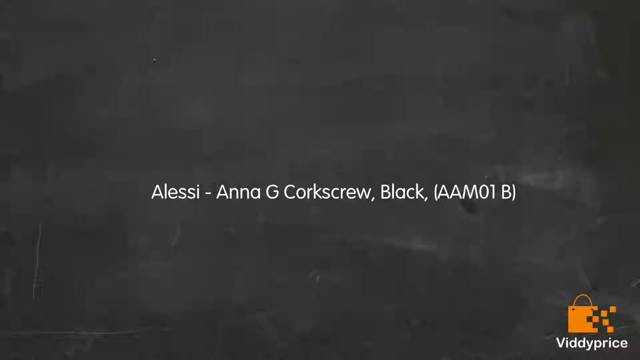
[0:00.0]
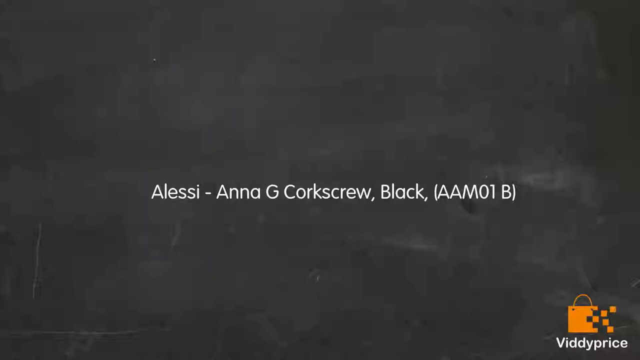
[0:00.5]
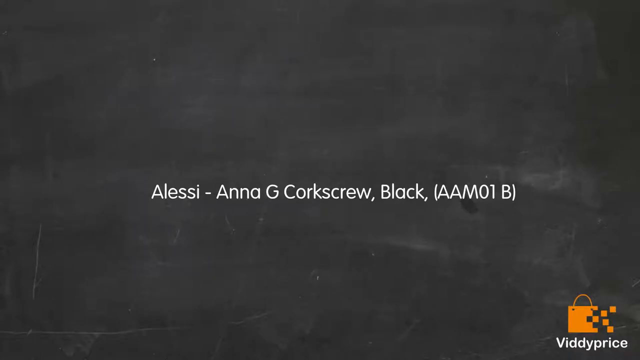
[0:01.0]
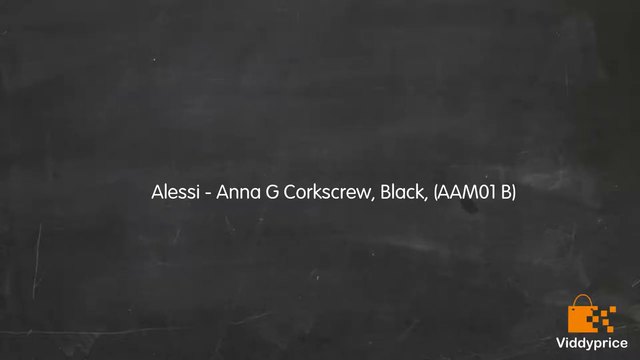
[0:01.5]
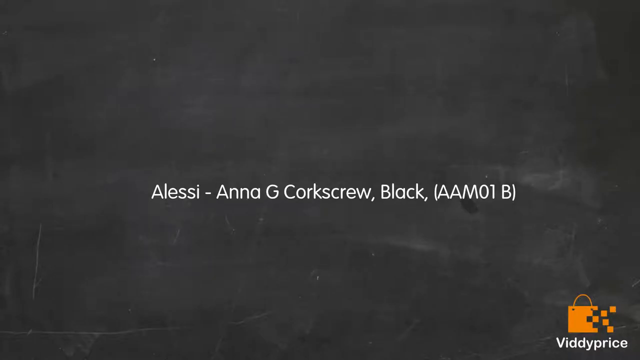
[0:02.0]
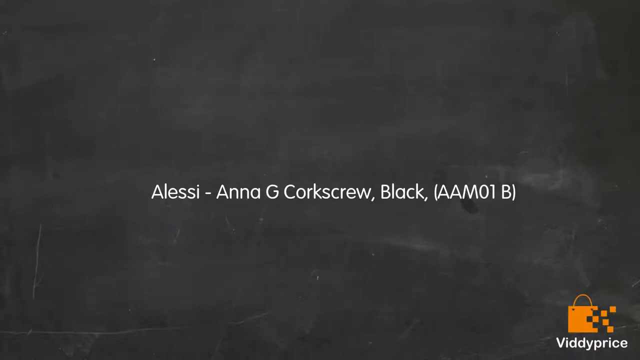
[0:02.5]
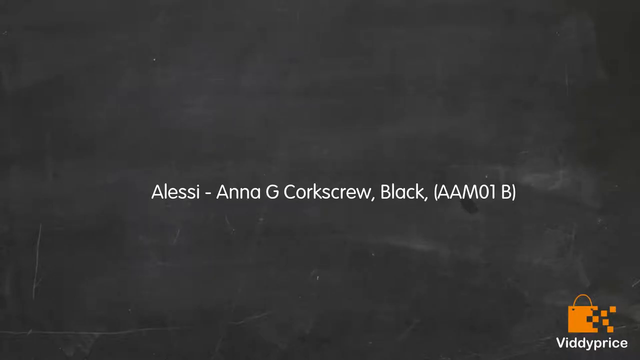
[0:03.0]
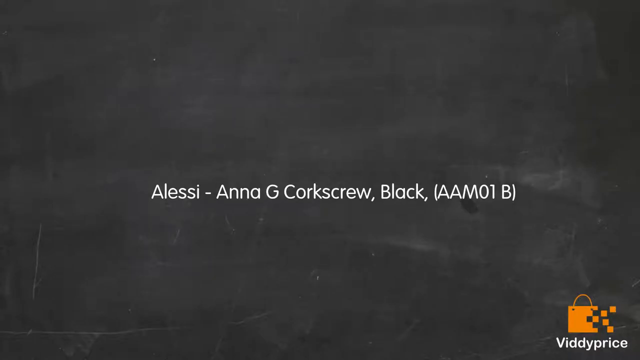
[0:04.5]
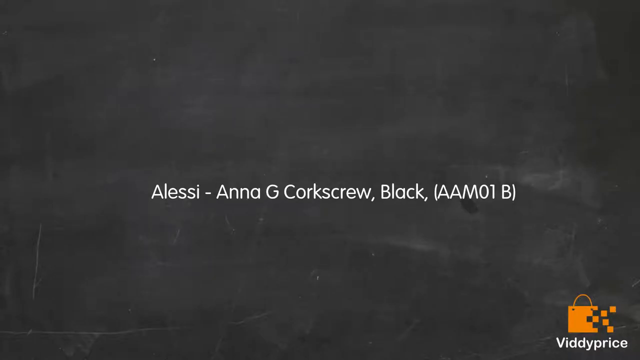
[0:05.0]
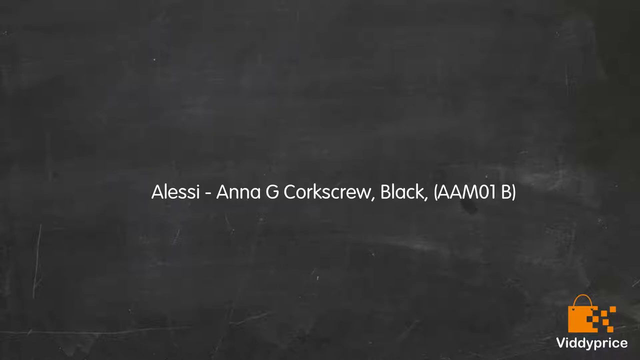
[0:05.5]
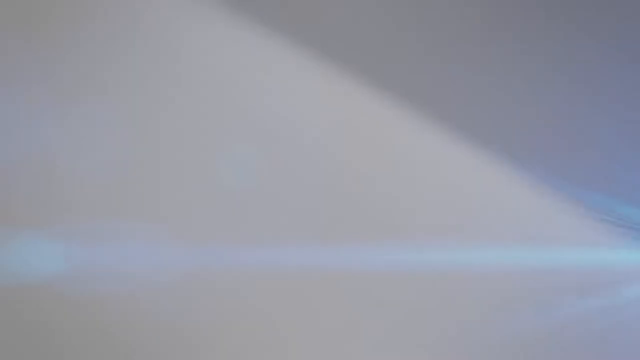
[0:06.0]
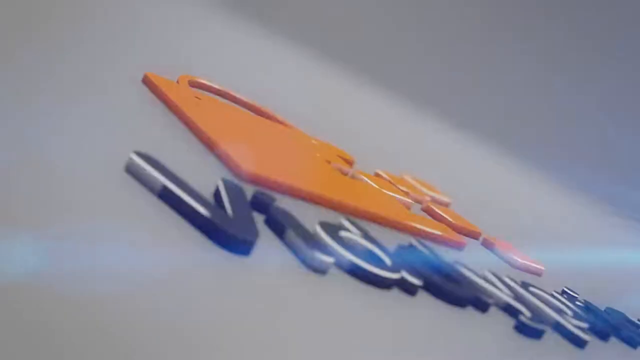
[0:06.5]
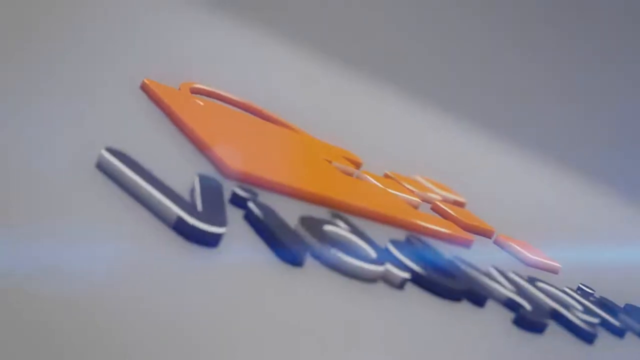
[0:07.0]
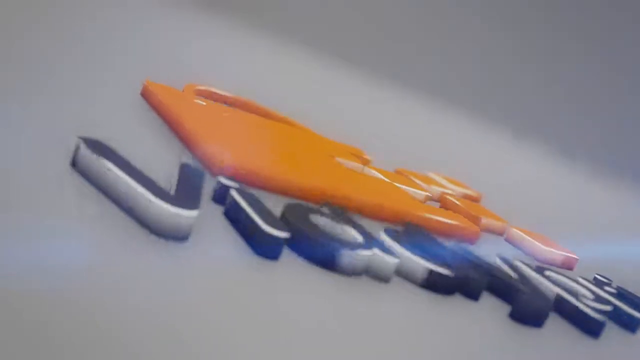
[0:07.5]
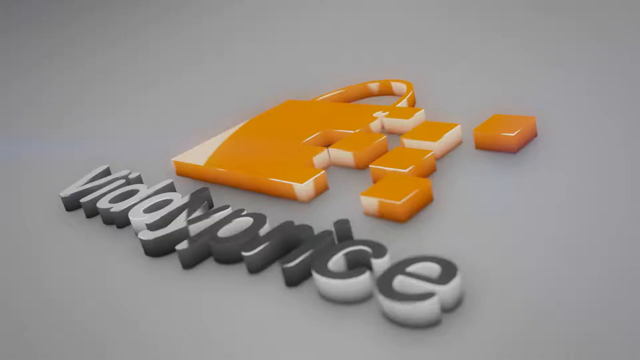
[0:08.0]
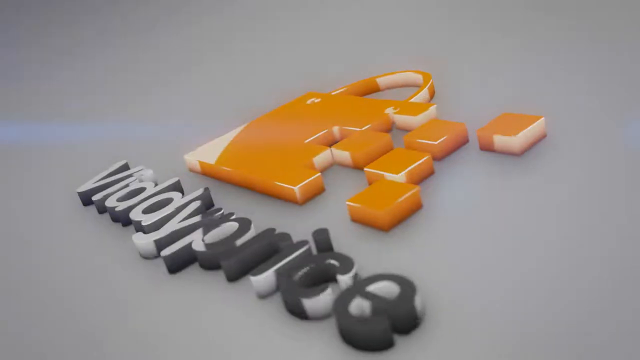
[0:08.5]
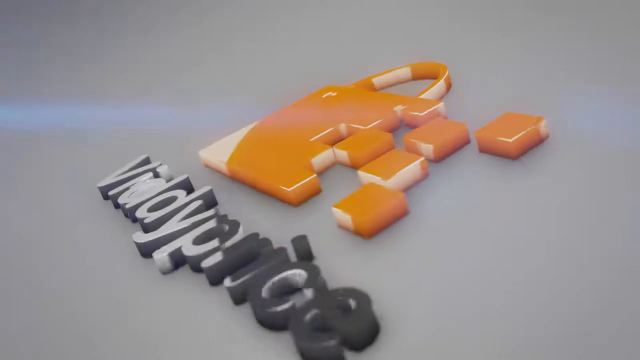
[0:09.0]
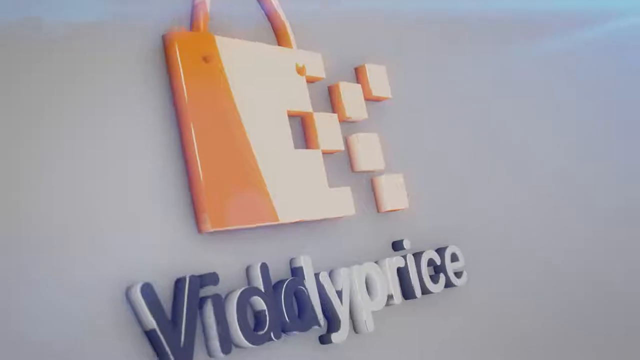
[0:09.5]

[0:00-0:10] White text appears on a black background that looks like a flat chalkboard that has been poorly erased. It reads "Alessi - Anna G corkscrew. Black" and then, in parentheses, "AAM01B", apparently an item number. After this, a logo pops onto the screen that says "Viddy Price". The logo is almost three-dimensional and looks shiny, almost as if it were made to look like plastic. Above the words there is something like an orange shopping bag that is coming apart into cubes.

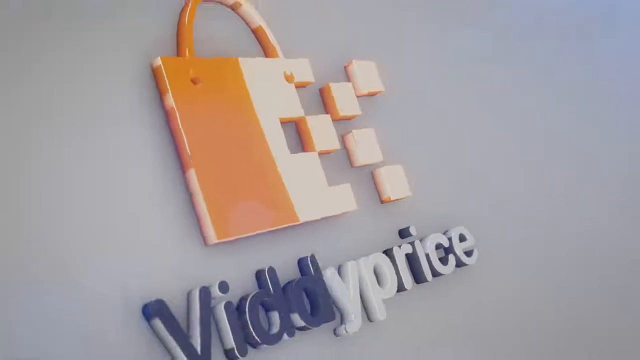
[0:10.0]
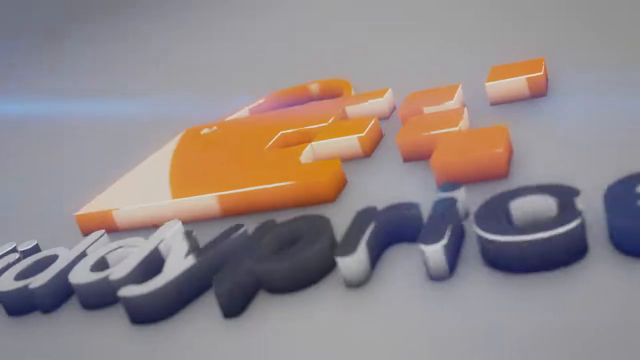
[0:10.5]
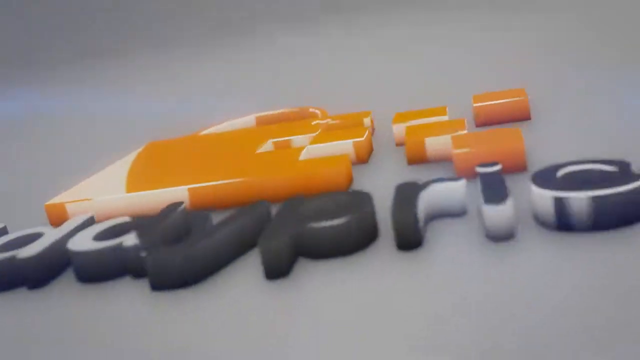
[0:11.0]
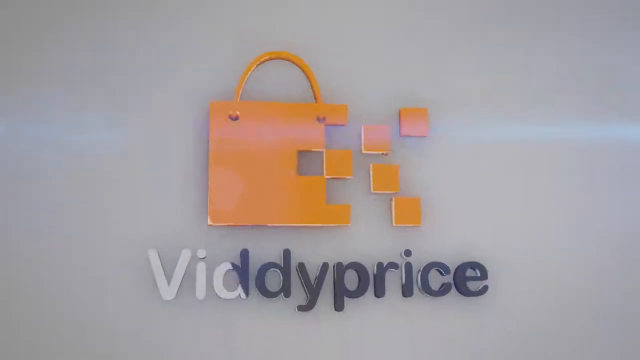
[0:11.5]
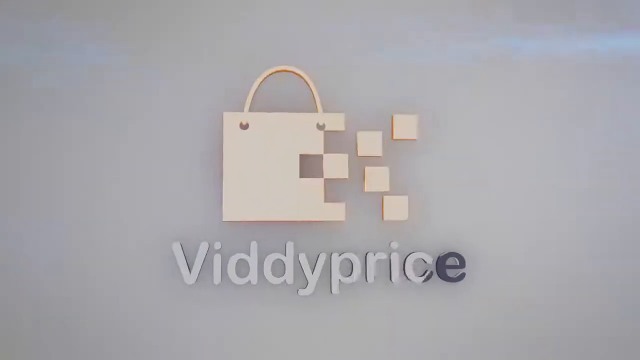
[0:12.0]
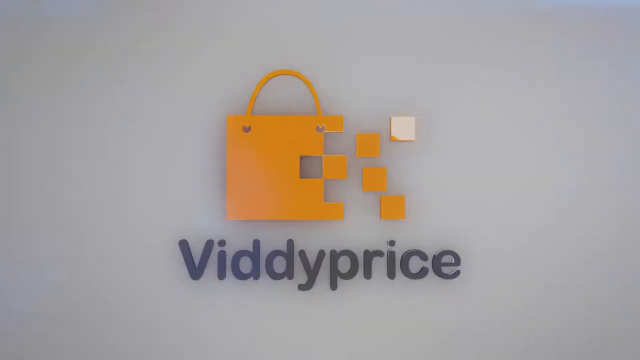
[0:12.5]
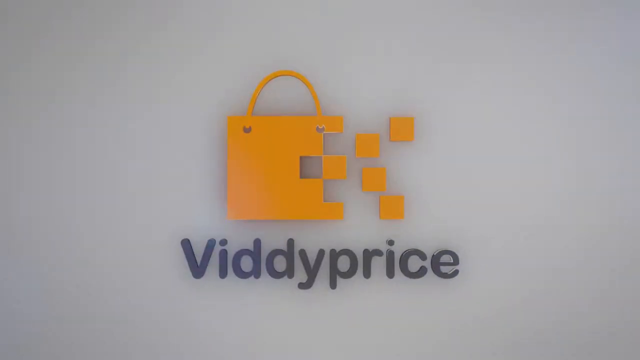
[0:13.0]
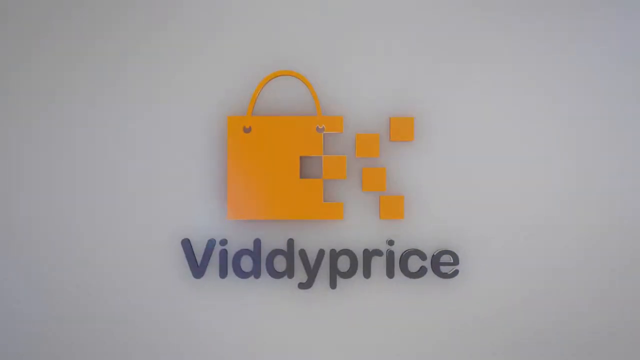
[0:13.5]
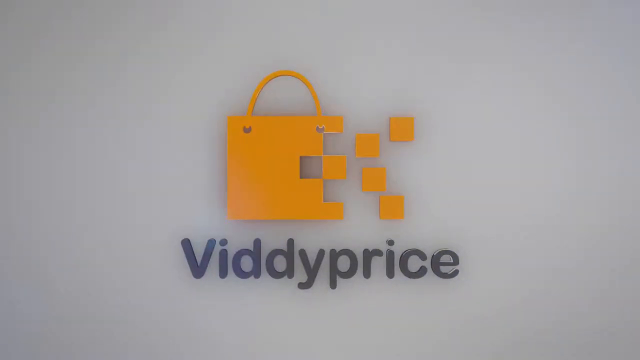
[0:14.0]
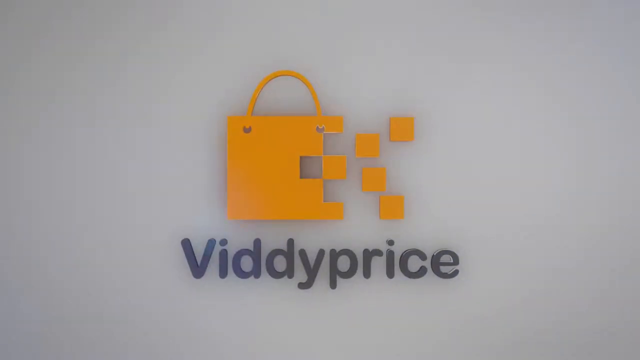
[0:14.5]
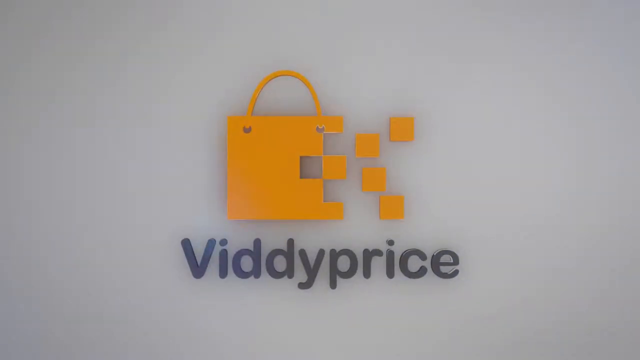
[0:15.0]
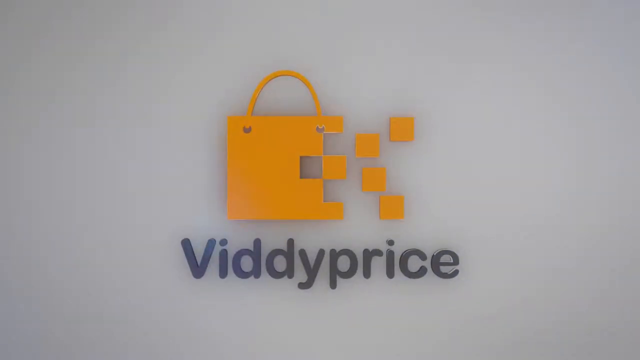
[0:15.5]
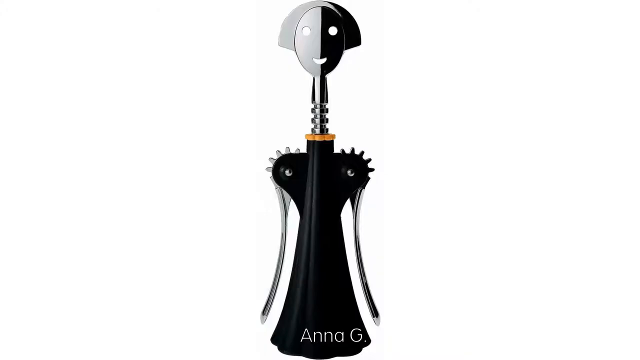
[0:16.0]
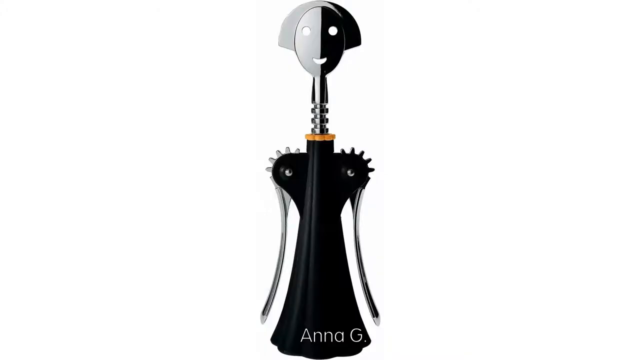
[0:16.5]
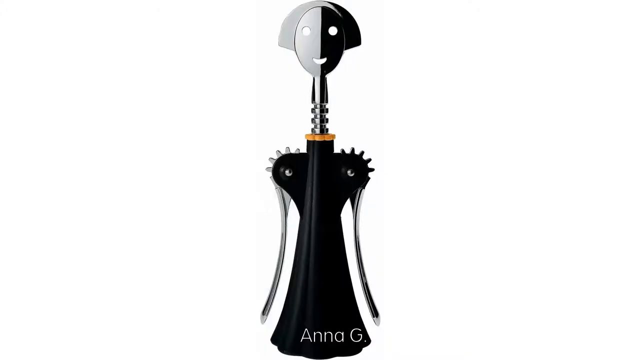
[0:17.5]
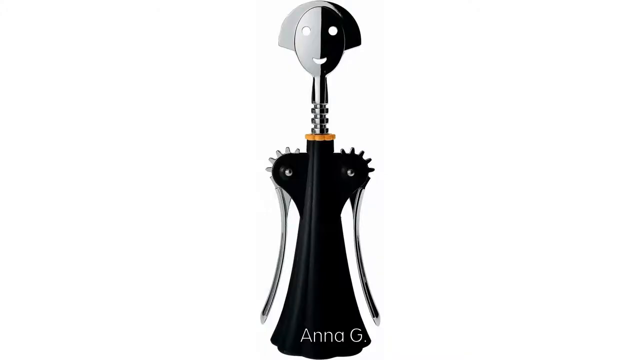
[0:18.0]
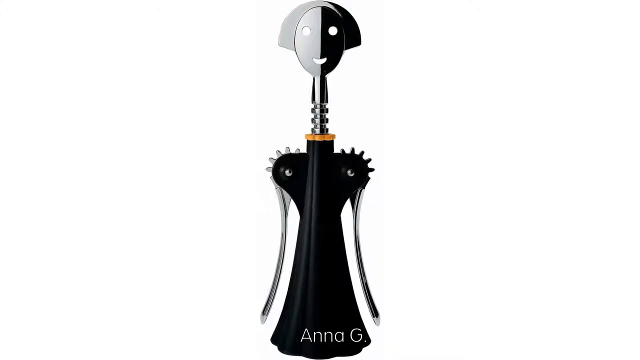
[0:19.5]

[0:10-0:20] Another view of the VidiPrice logo appears on a white background, reading "VidiPrice". The lettering is kind of multi-colored, seemingly changing colors as it moves around, and is kind of raised, almost like plastic toy letters sitting on the white background. From this angle it appears kind of blue and white and three-dimensional. Above it is an image of an orange shopping bag that looks like it has pieces coming apart, made of cubes. The logo spins around before settling on an overhead view that is now two-dimensional and no longer shining: just the orange bag with "VidiPrice" below it. A quick view of a corkscrew follows.